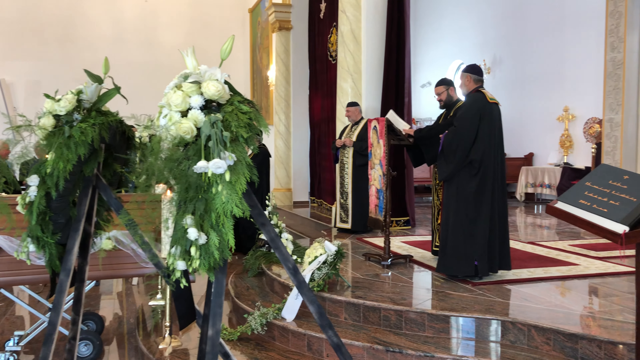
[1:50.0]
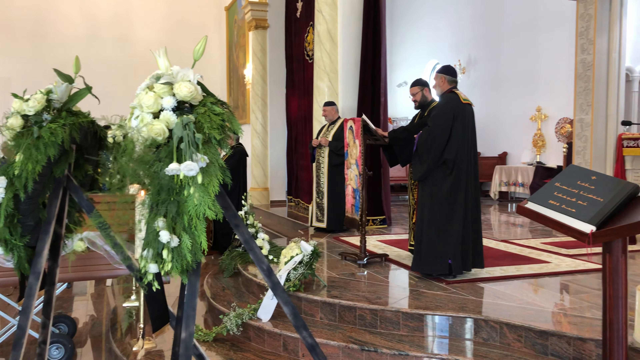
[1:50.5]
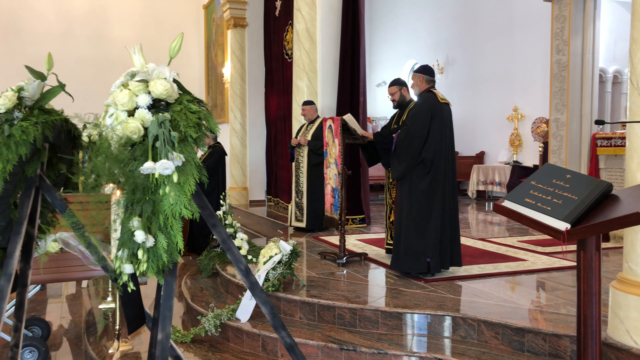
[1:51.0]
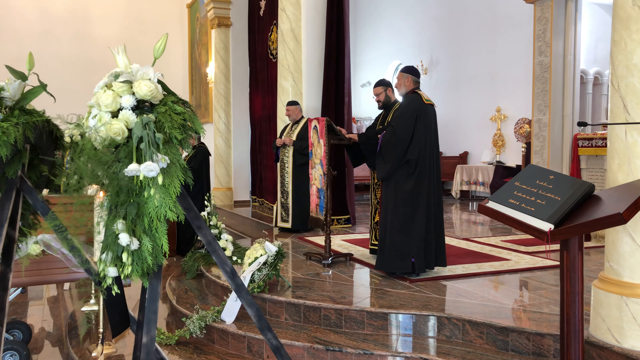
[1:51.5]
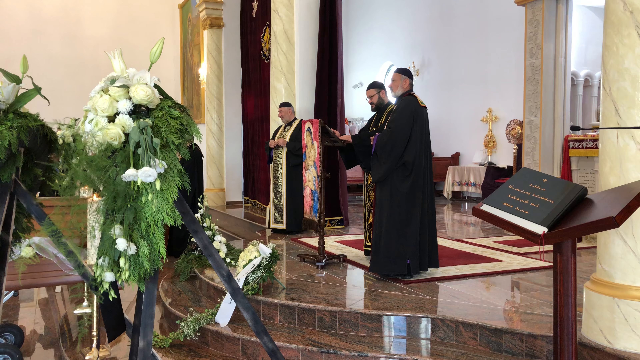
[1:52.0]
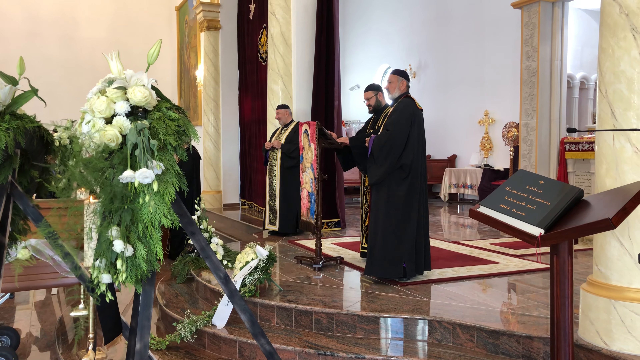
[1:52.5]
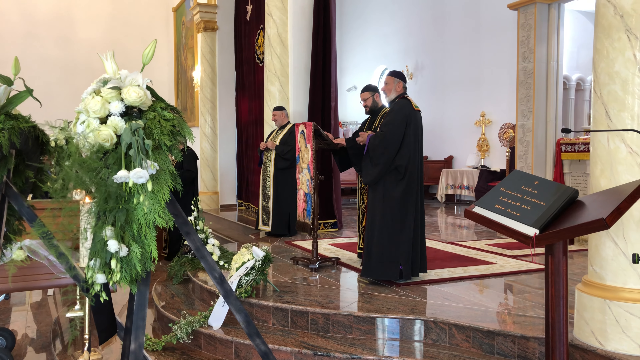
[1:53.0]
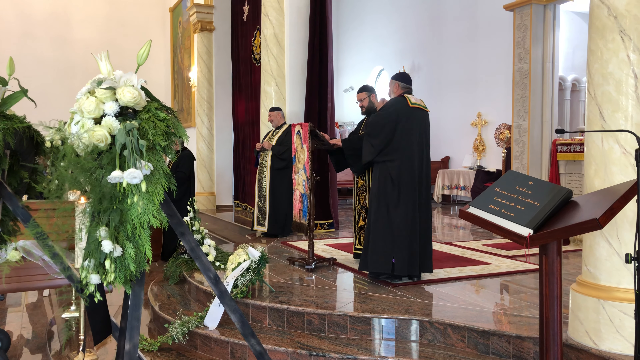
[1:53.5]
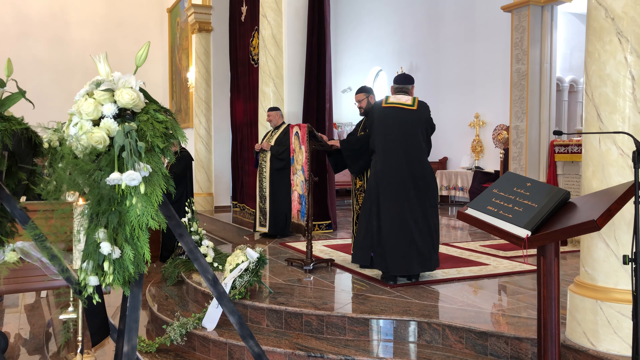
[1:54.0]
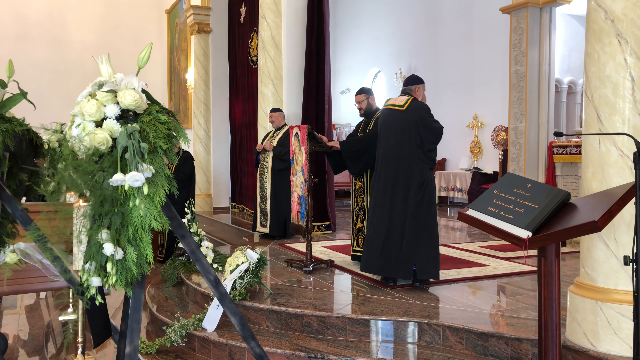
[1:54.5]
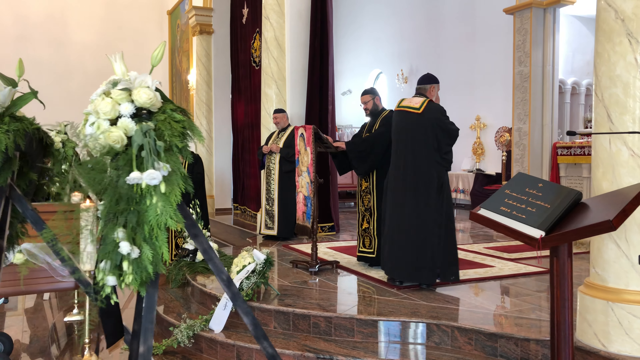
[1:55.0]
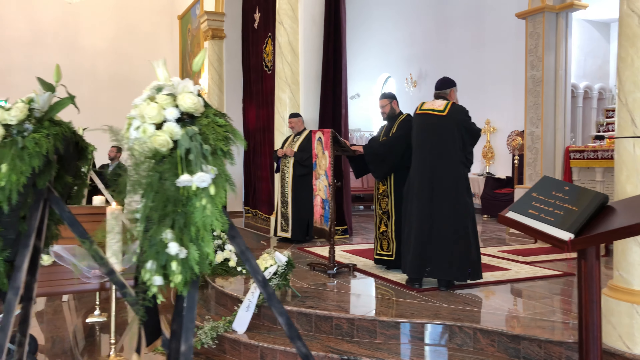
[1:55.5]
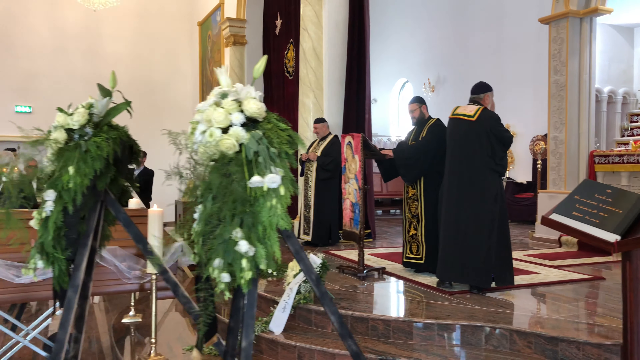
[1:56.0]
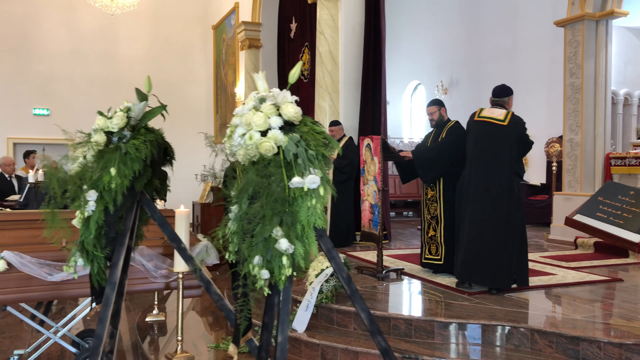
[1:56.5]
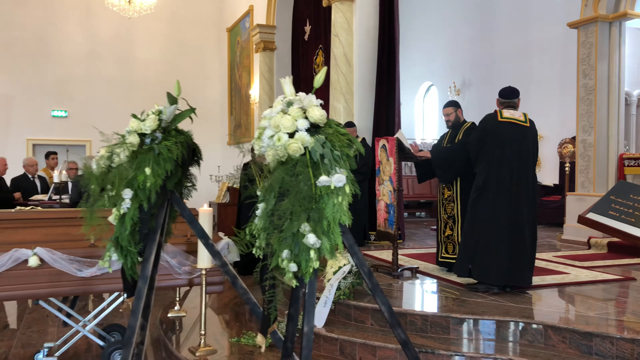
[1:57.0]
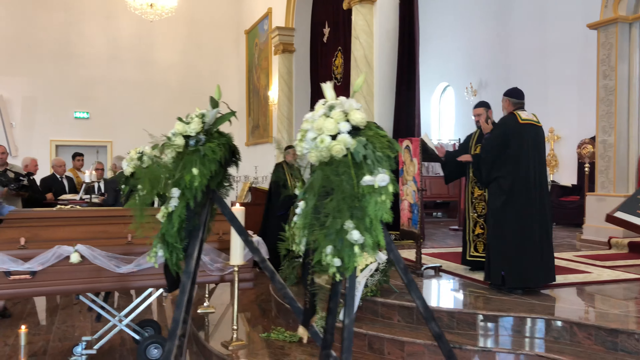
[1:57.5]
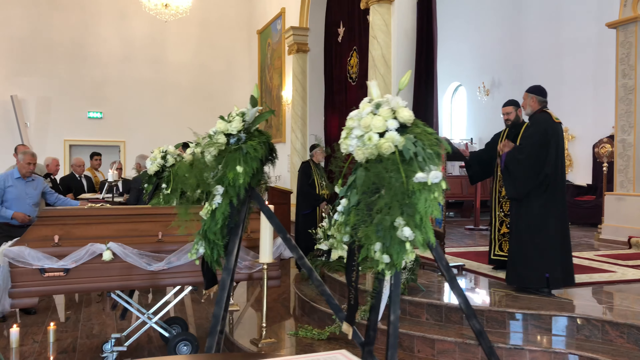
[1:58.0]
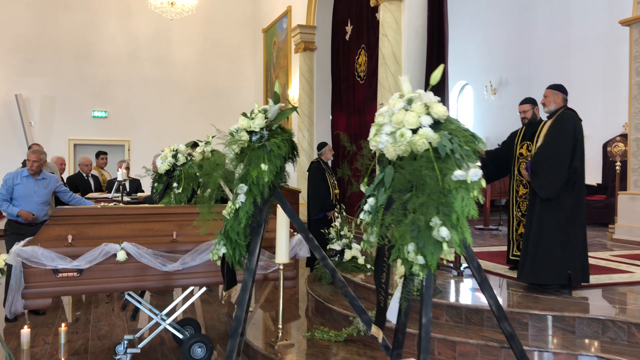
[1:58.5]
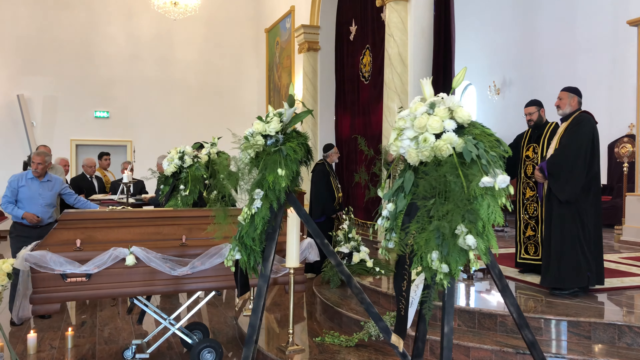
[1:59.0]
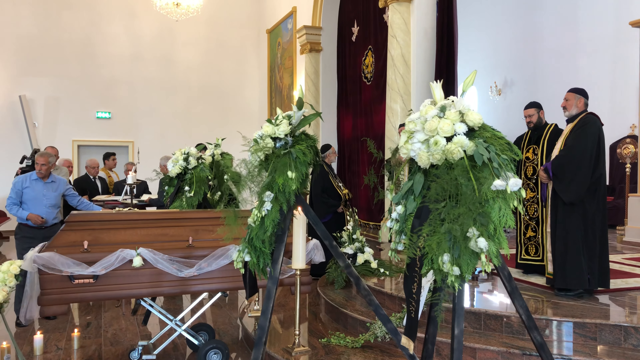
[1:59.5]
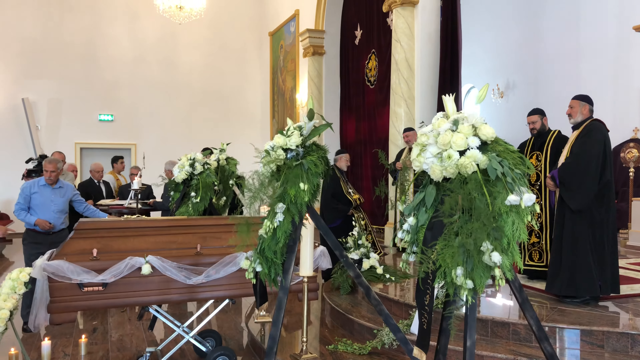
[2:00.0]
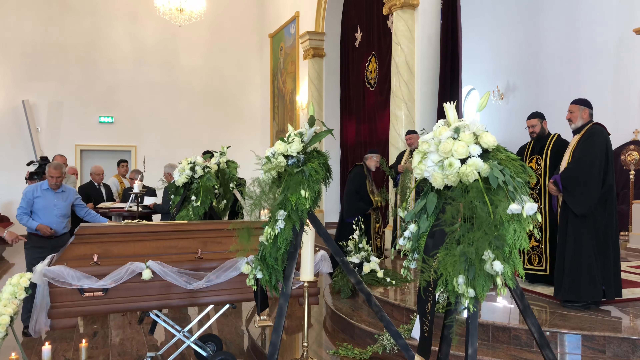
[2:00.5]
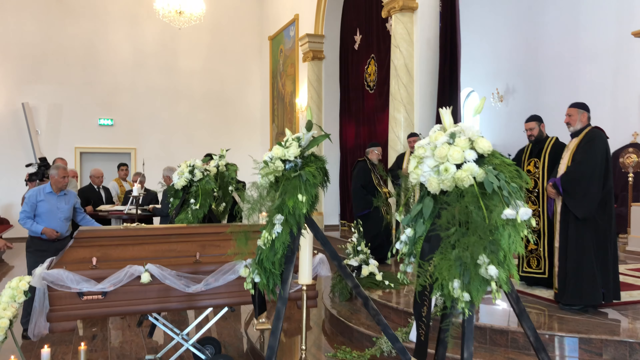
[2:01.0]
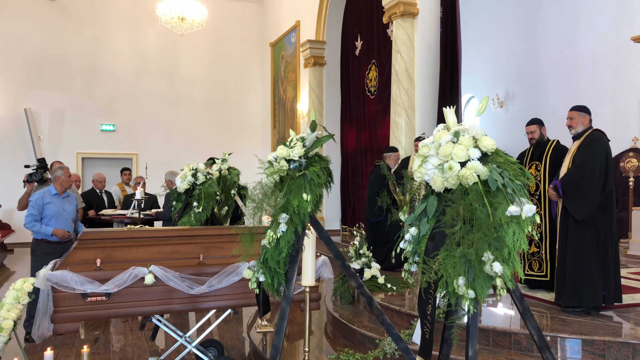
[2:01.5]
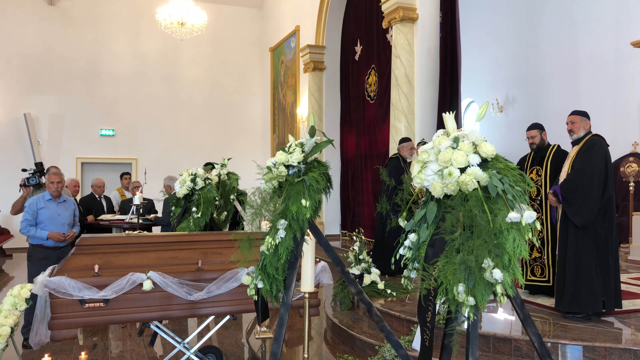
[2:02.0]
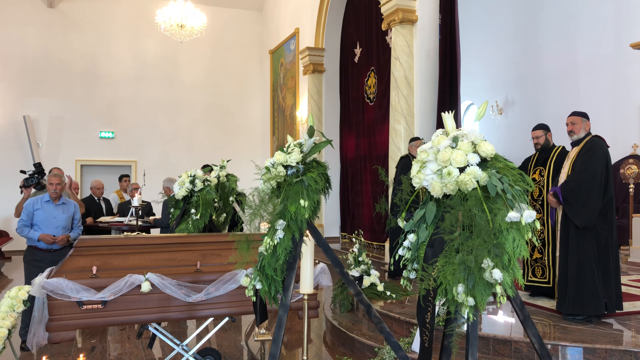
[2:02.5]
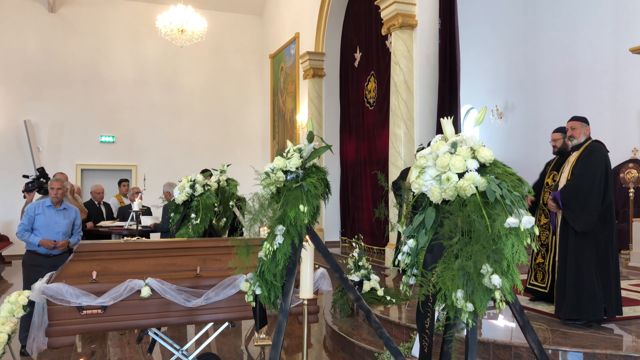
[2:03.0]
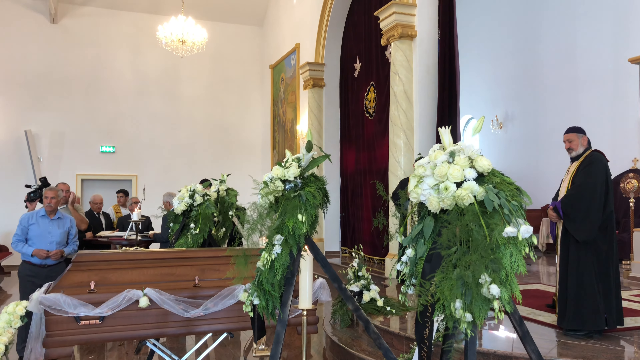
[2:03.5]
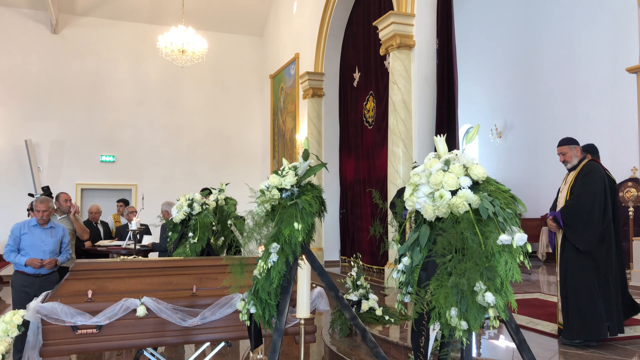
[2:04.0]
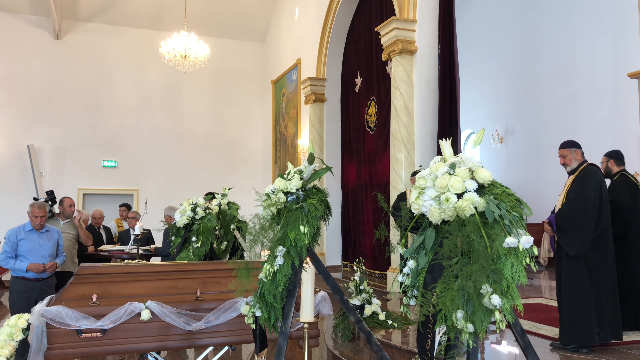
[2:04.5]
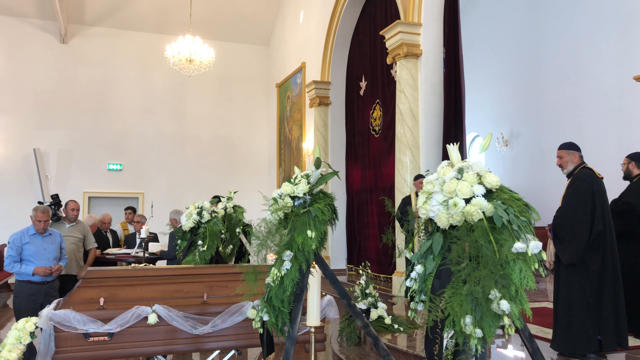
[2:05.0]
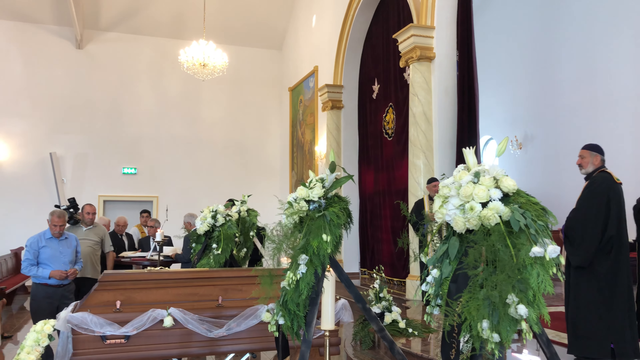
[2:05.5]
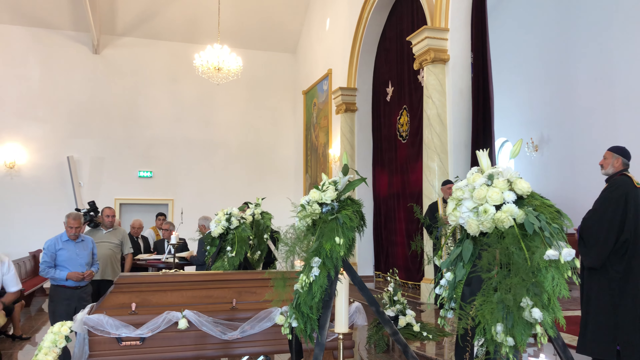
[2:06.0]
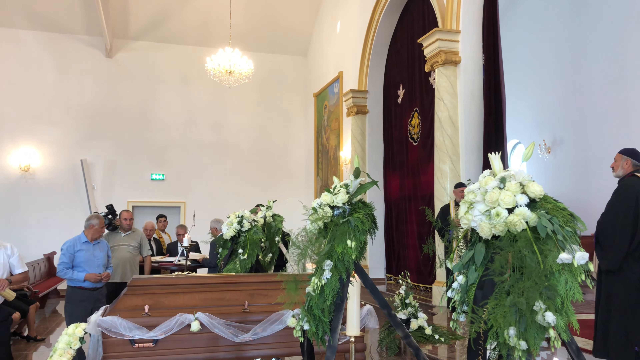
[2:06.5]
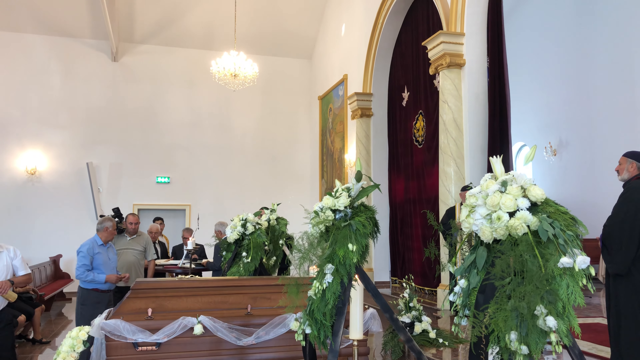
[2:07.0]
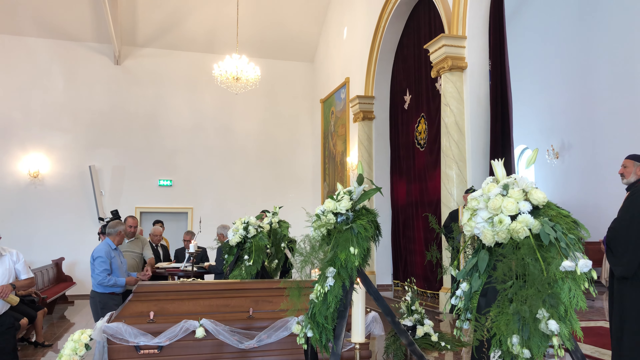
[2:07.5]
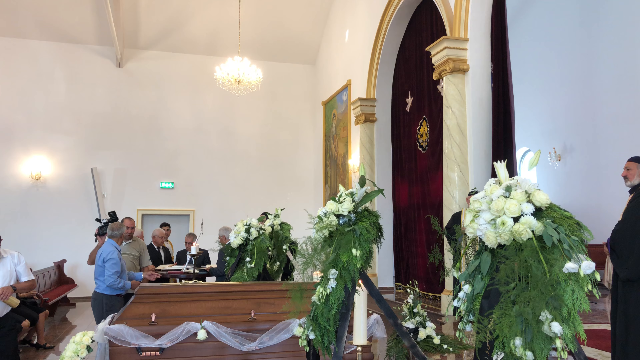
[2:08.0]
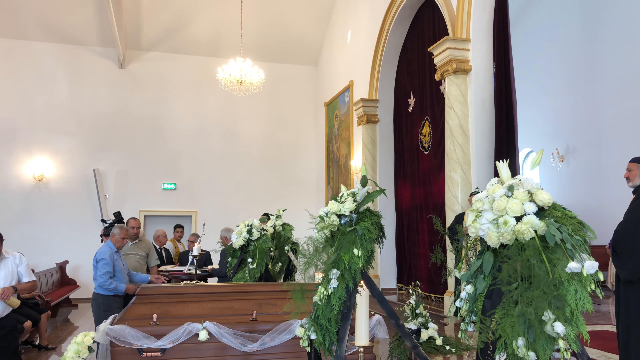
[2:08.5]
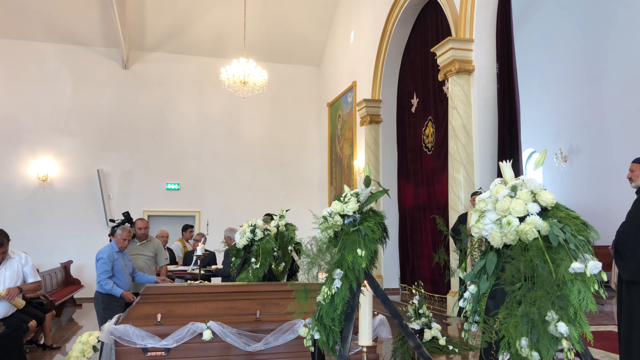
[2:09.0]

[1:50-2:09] From the side of the stage area, the three clergymen are visible: one is shuffling papers at the podium, one stands next to him, and another is off to the side about 15 feet away. The camera pans more to the right, and one of the clergymen turns around and covers his nose and mouth to sneeze. The three men are dressed in black robes with long scarf-like garments around their necks, seemingly colorful scarves, some type of religious garb. The camera pans back to the casket, where quite a few men stand around a table behind the casket. From this angle a white ribbon is visible around the edge of the casket, and the video cameraman is in the background. The third clergyman, who was standing further away, takes a few steps closer to the podium. Behind where the group of men stands at the table is an exit door, marked by a big green light over the top of it.